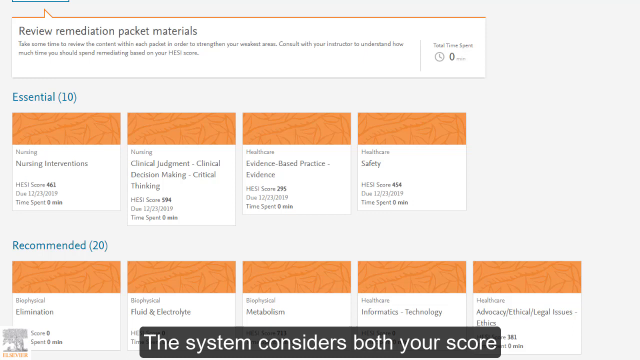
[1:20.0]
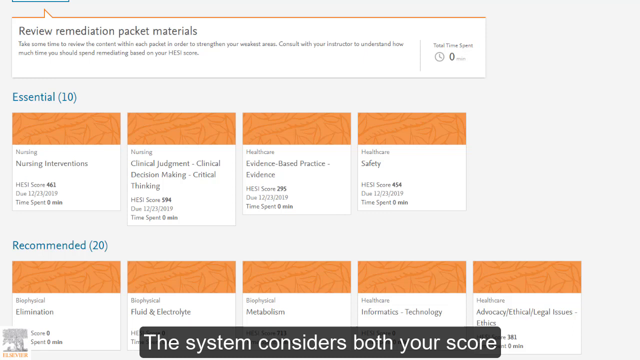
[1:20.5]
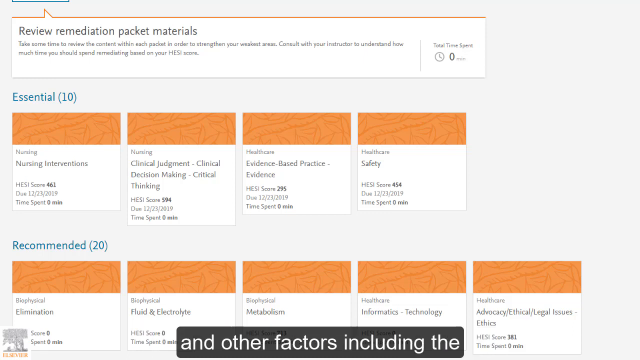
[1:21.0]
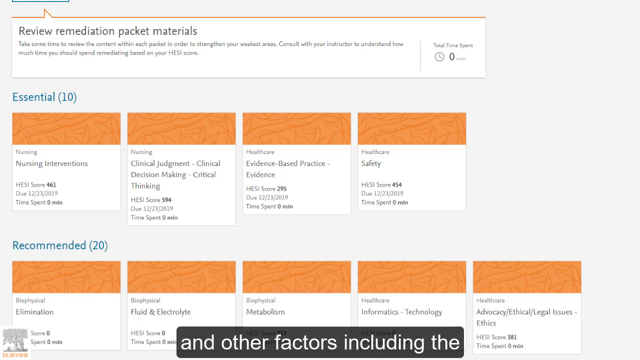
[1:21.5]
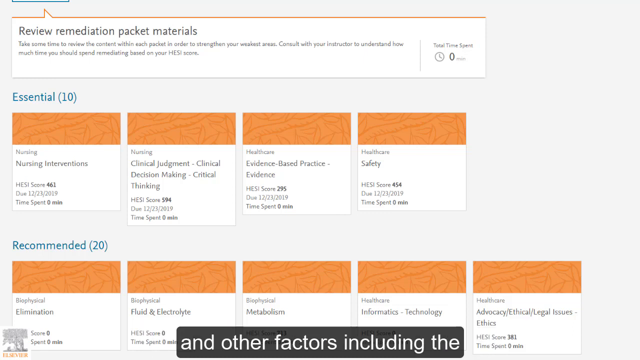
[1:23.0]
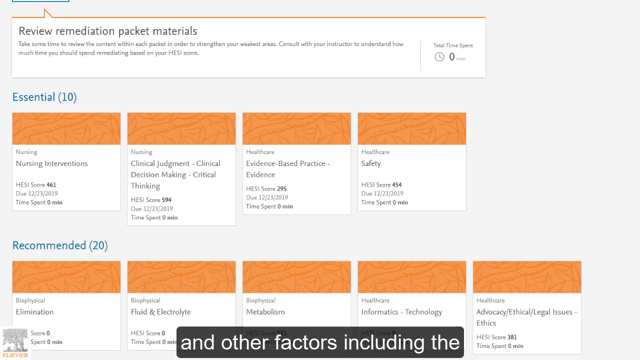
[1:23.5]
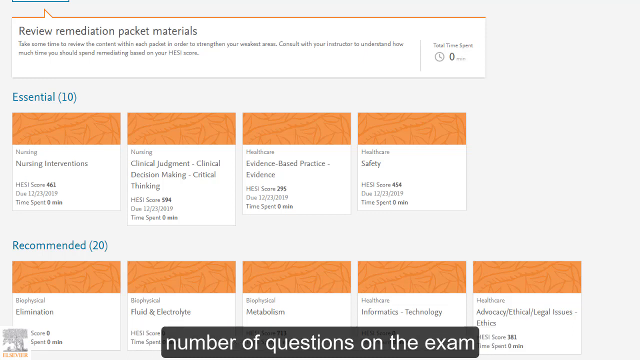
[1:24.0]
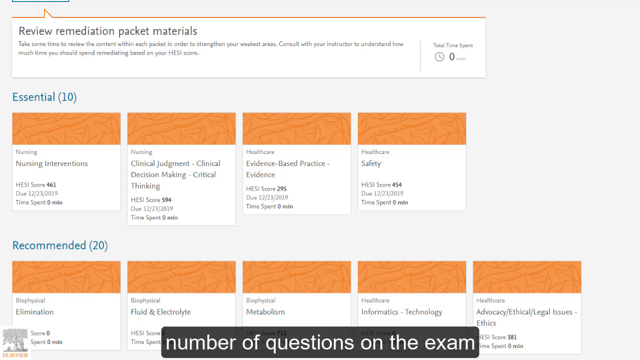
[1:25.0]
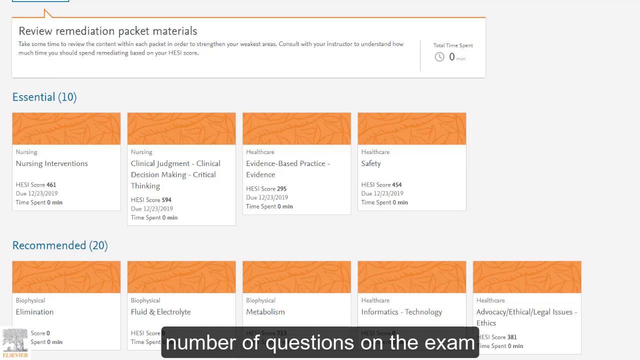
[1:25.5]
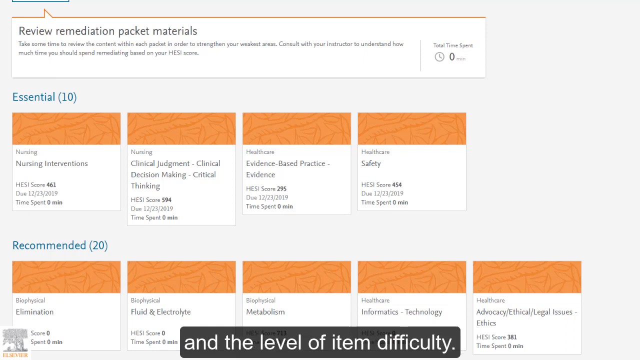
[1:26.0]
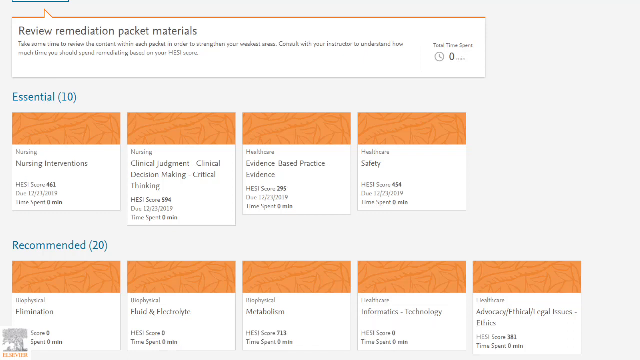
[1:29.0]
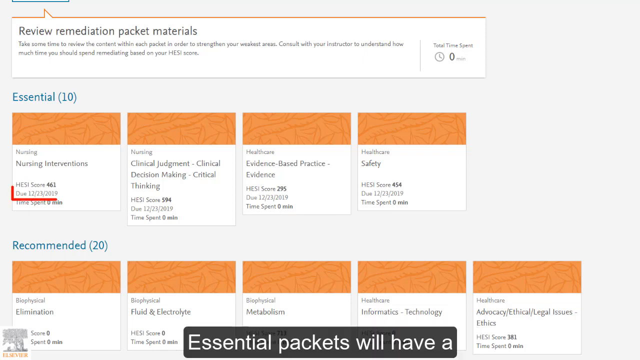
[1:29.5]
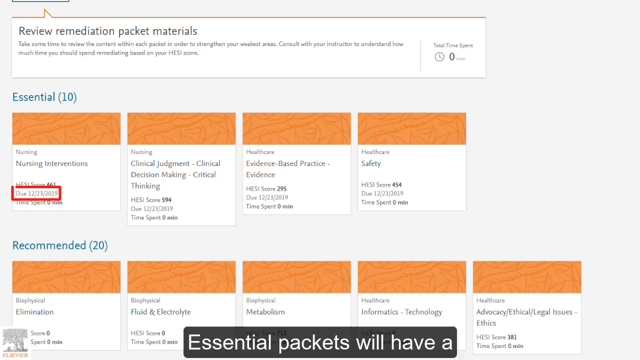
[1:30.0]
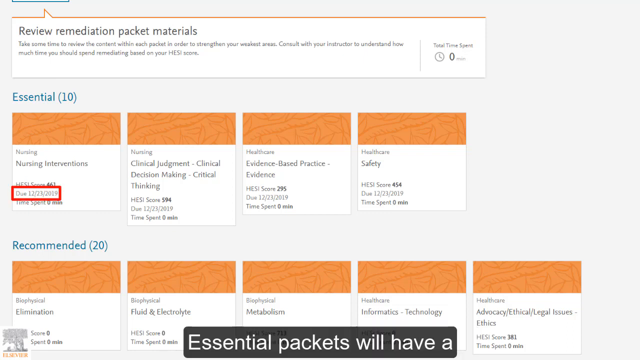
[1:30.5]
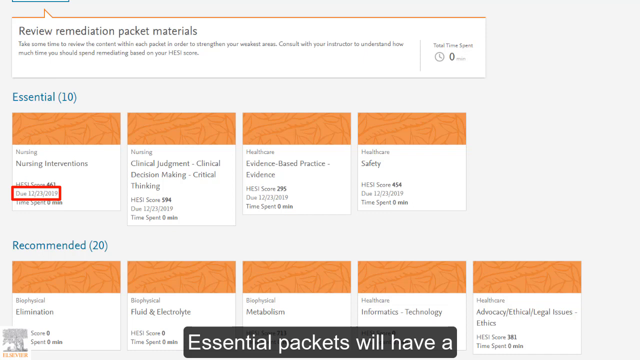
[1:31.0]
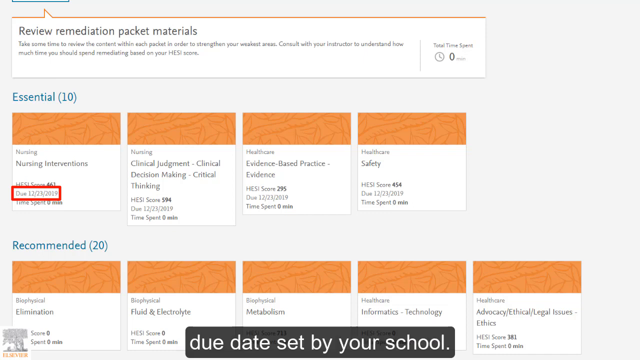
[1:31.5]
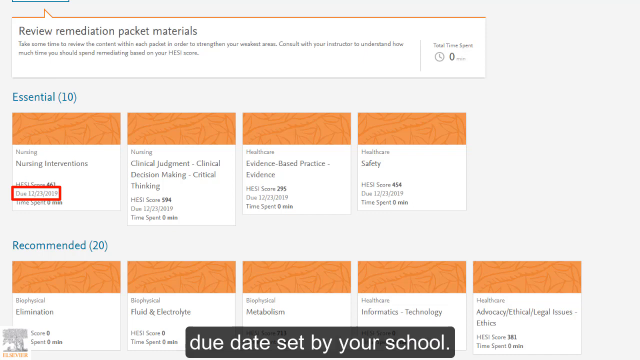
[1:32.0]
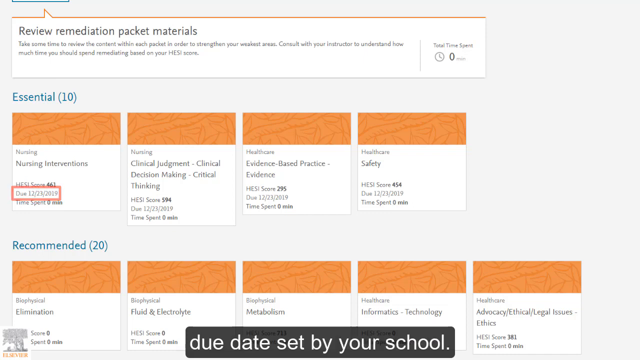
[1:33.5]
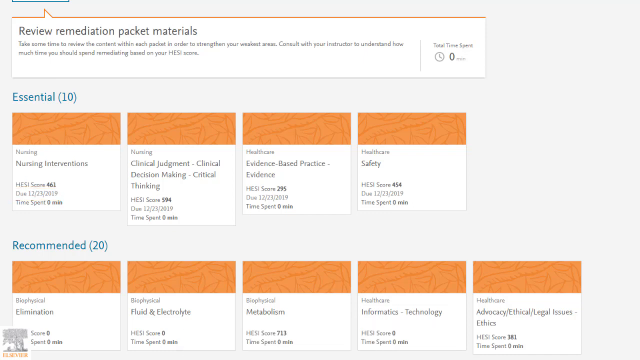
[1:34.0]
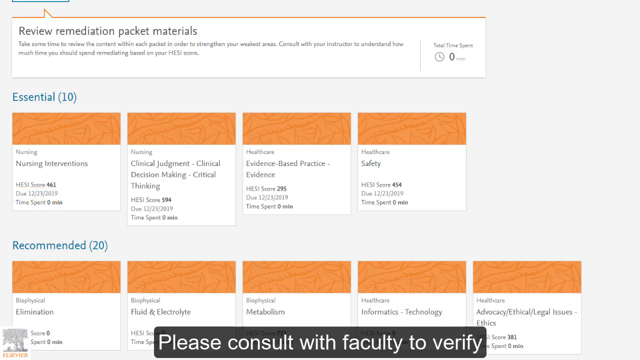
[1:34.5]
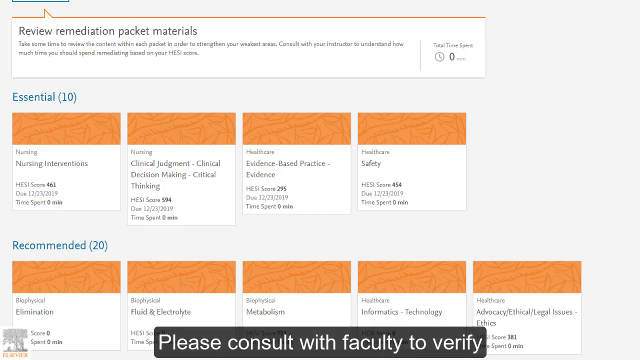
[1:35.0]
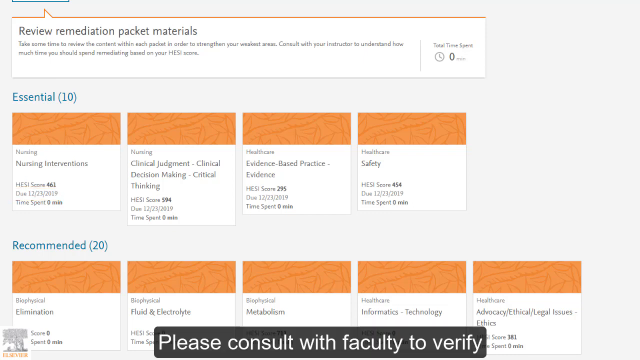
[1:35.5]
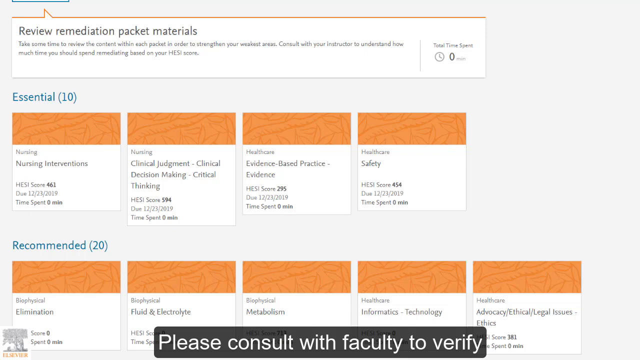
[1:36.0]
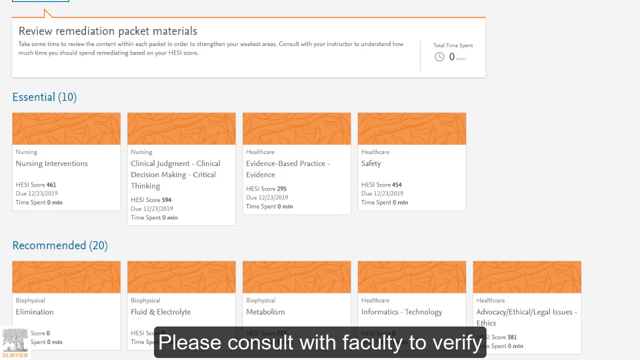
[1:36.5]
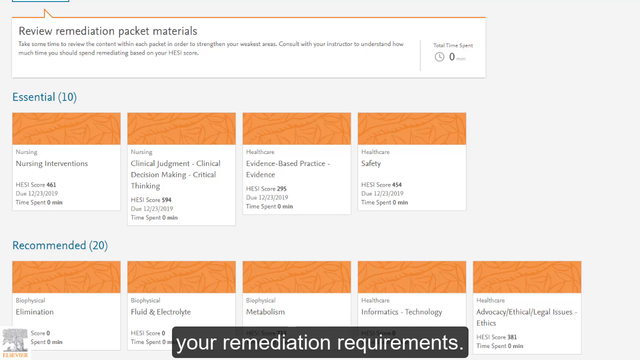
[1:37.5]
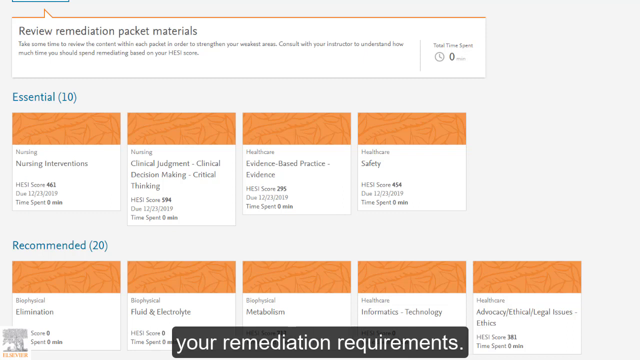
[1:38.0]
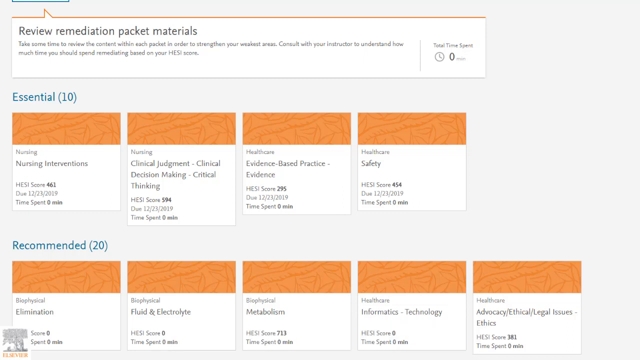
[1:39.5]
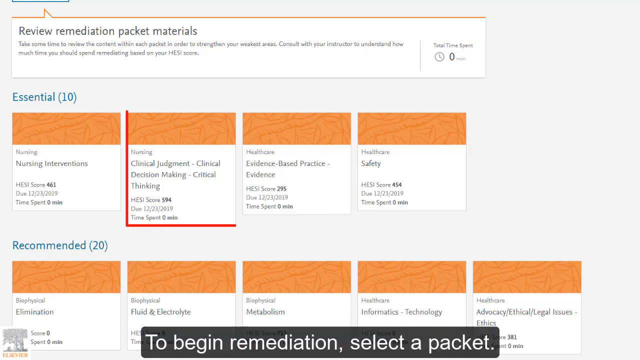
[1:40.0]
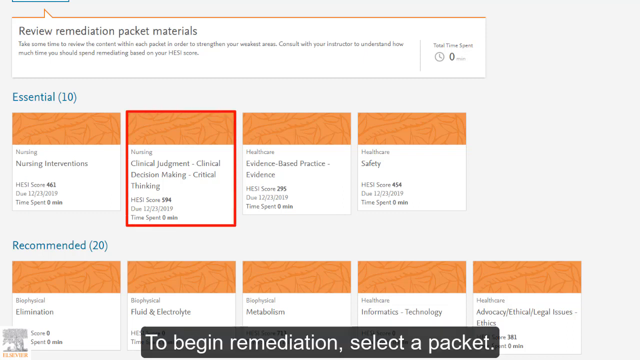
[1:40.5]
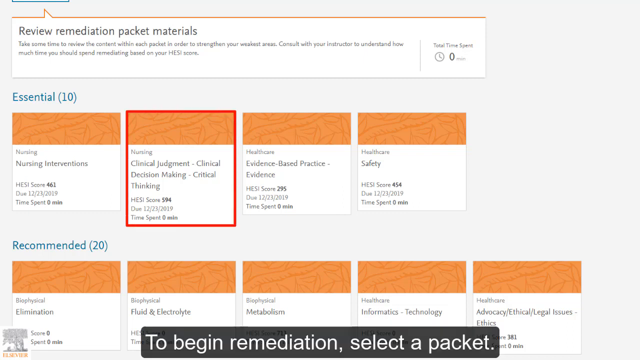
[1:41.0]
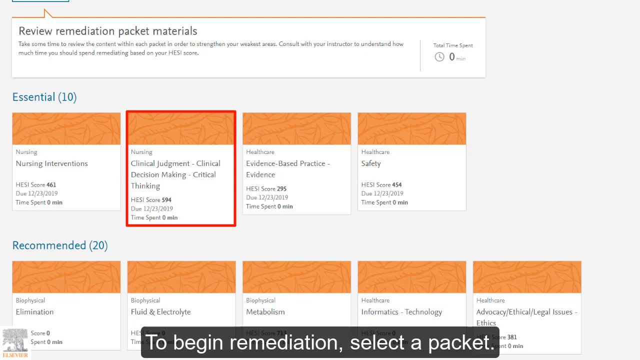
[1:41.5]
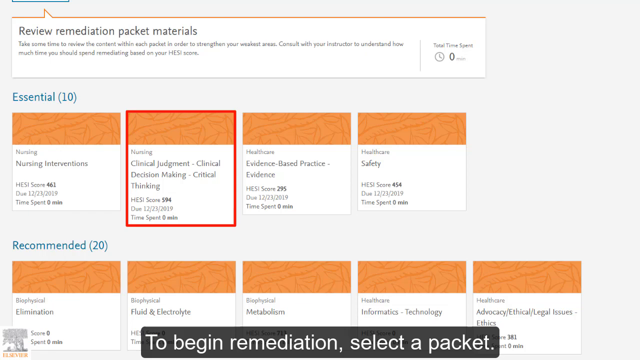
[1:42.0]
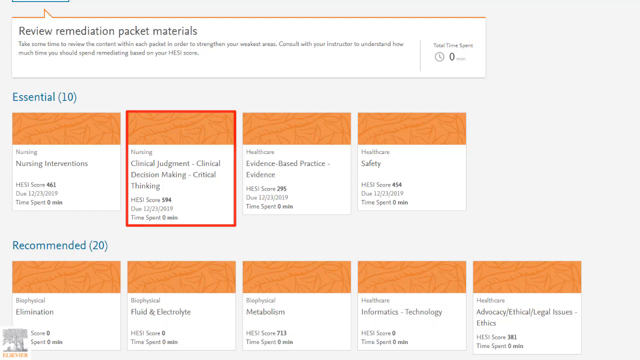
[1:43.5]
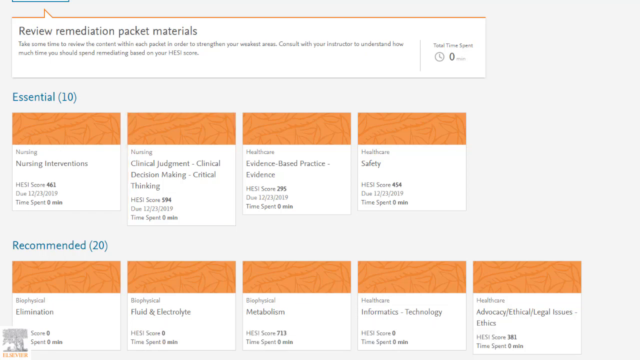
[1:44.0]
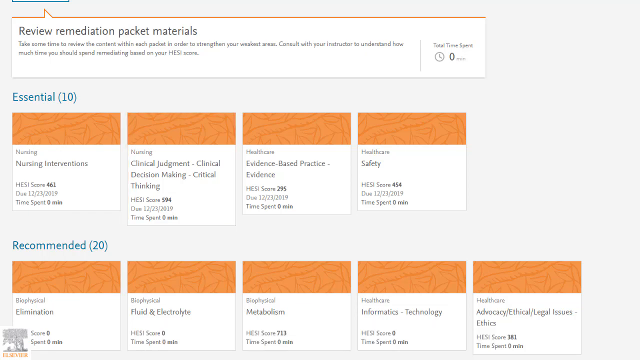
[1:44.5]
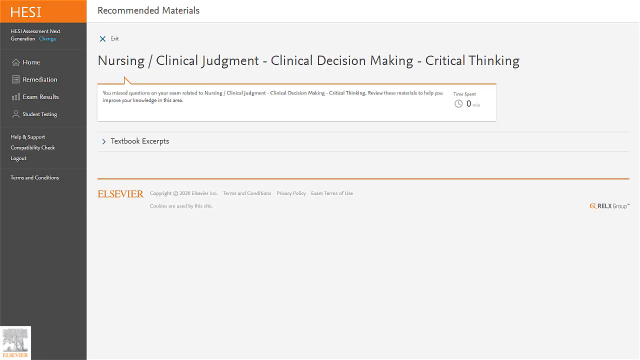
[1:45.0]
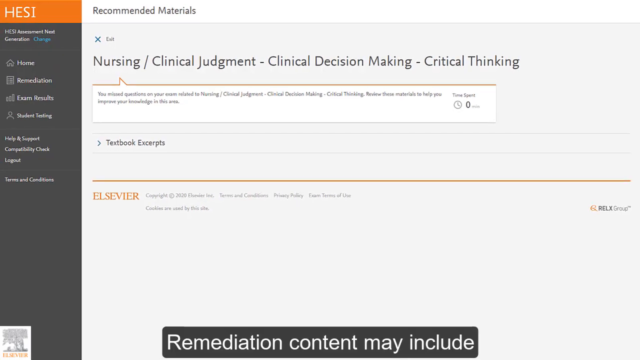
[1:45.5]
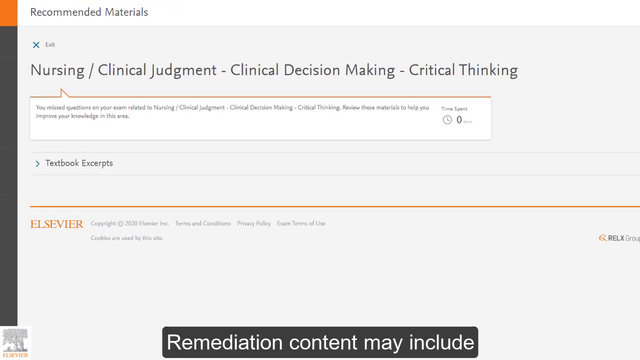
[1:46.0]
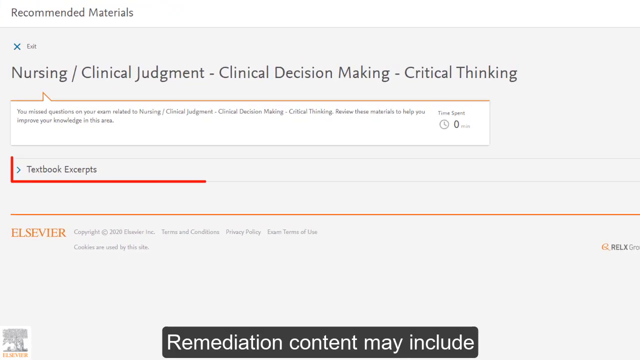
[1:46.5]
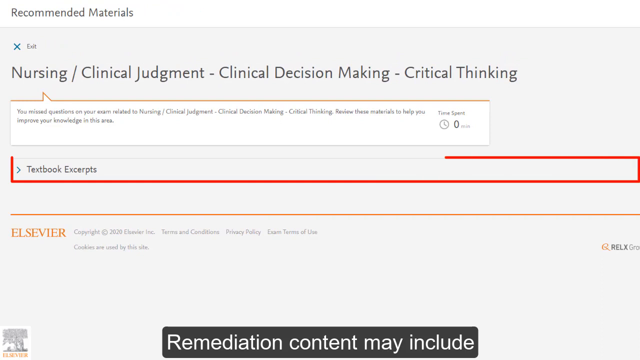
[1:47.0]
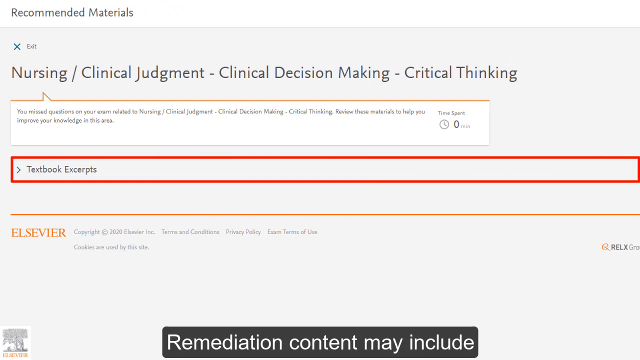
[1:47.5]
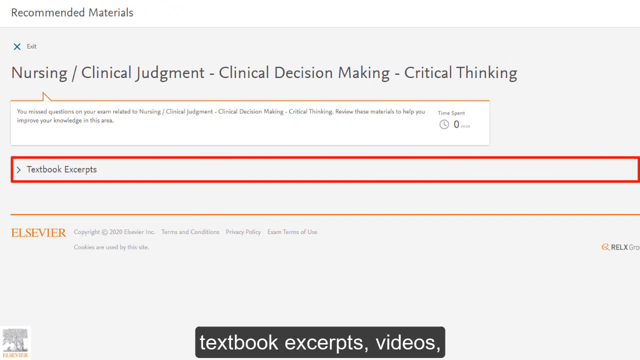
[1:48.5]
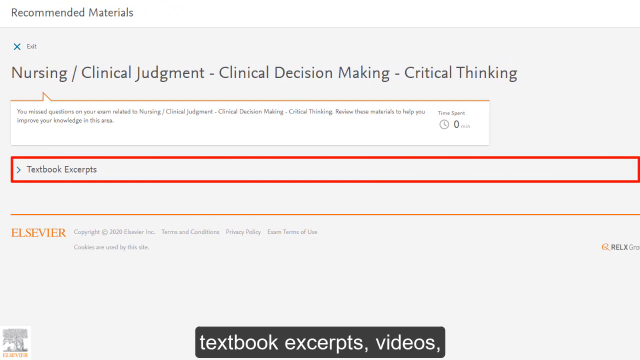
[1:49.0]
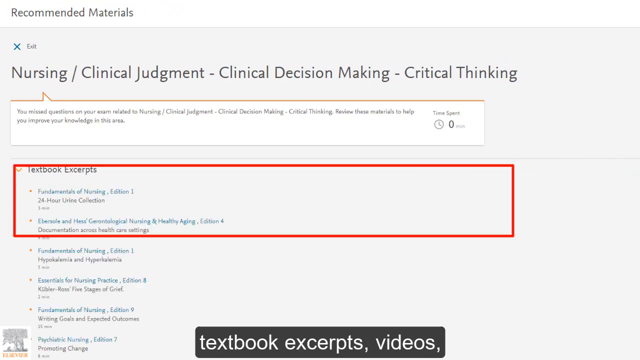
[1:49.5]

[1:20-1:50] The HESI remediation packet materials site shows the Essential 10 list: nursing interventions, nursing clinical judgment, clinical decision-making, critical thinking. Nursing clinical judgment has a HESI score of 594, dated 12-23-2019; health care evidence-based practice has a HESI score of 295; healthcare safety has a HESI score of 454, dated 12-23-2019. Text reads "and other factors including number of questions on the exam and the level of item difficulty. Essential packets will have a due date set by your school. Please consult with faculty to verify your remediation requirements. To begin remediation, select a packet." The next slide shows the recommended materials for nursing, clinical judgment, clinical decision-making, critical thinking, reading "you missed questions on your exam related to nursing, clinical judgment, clinical decision-making, critical thinking. Review these materials to help you improve your knowledge in this area," with "Textbook excerpts" and Elsevier.